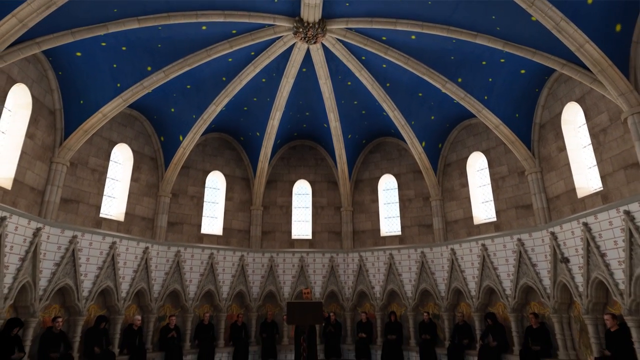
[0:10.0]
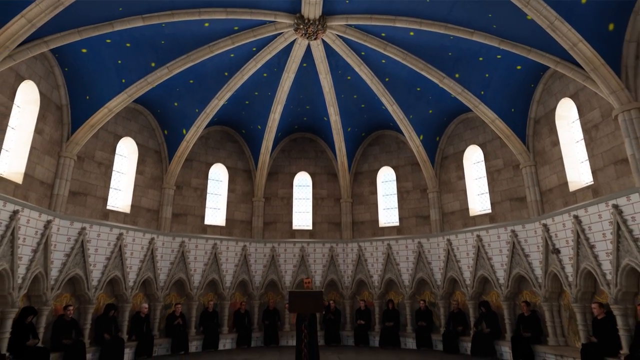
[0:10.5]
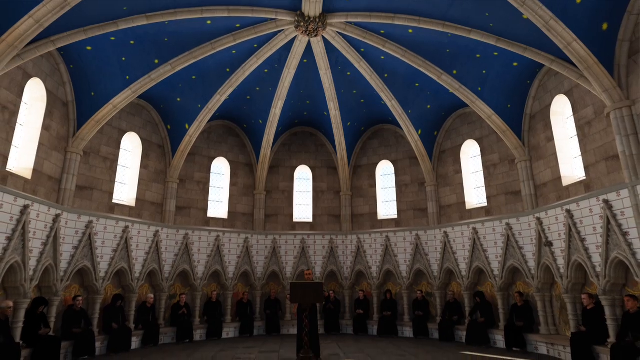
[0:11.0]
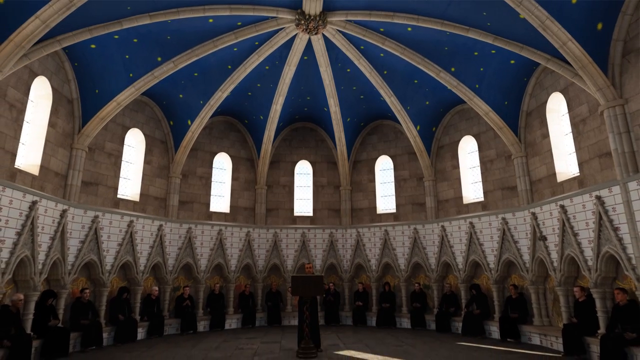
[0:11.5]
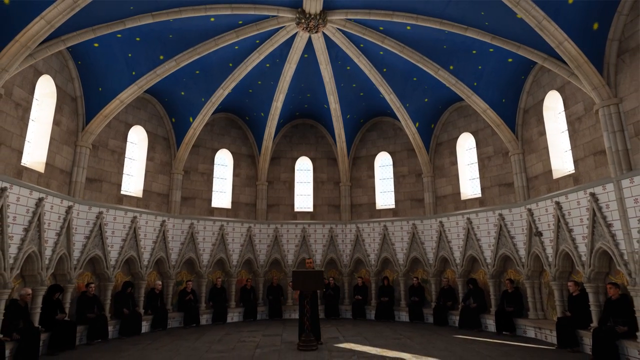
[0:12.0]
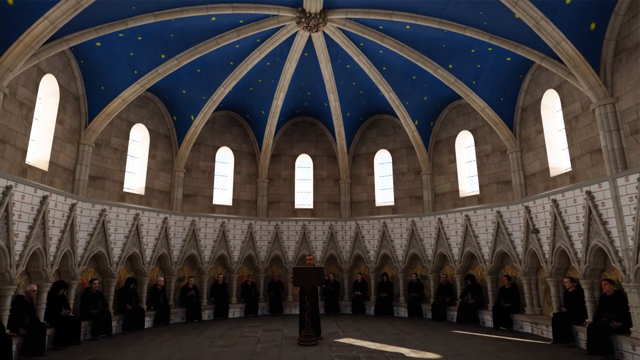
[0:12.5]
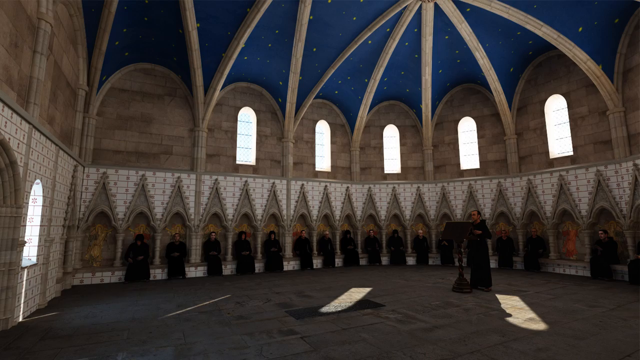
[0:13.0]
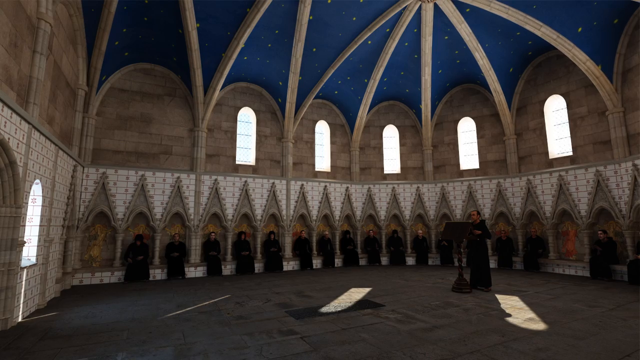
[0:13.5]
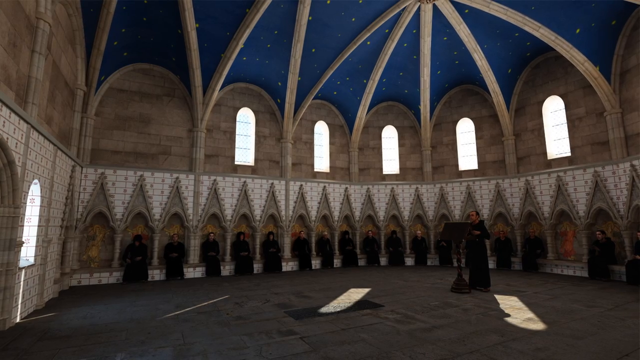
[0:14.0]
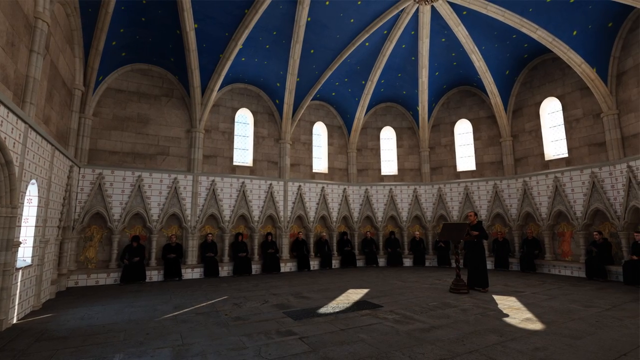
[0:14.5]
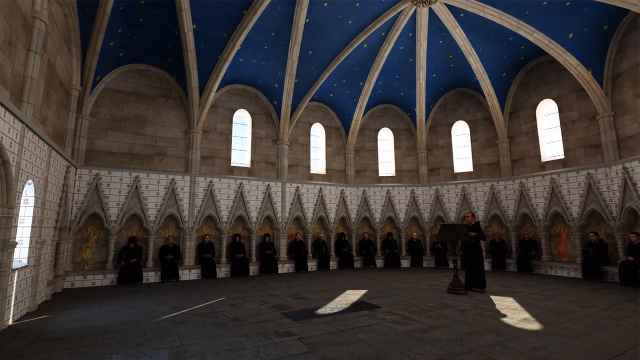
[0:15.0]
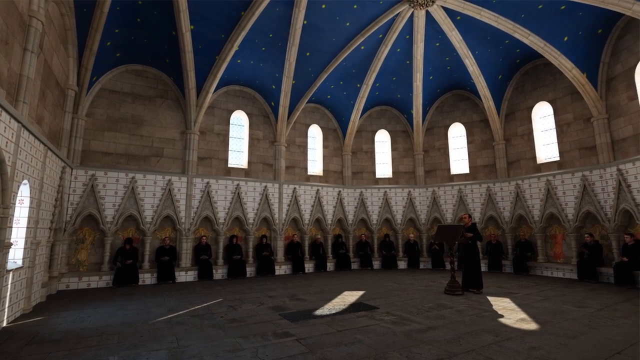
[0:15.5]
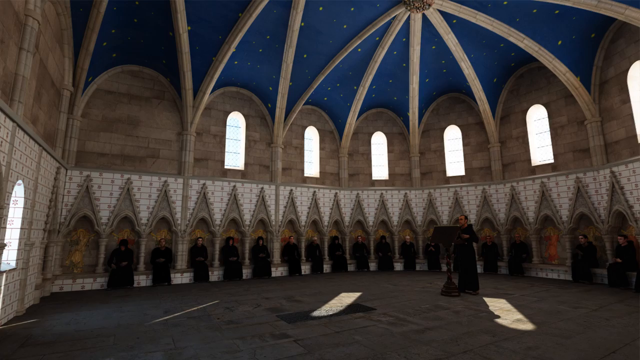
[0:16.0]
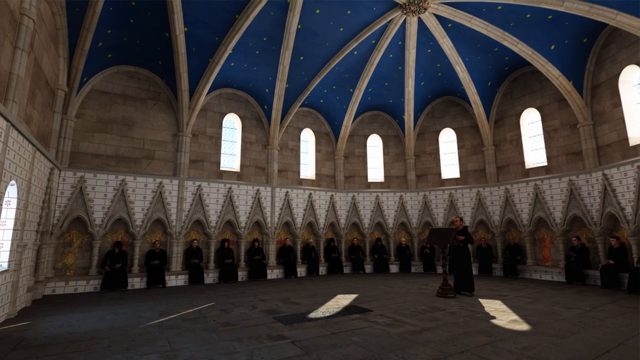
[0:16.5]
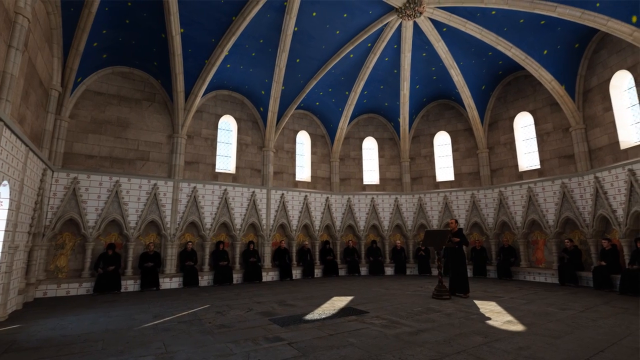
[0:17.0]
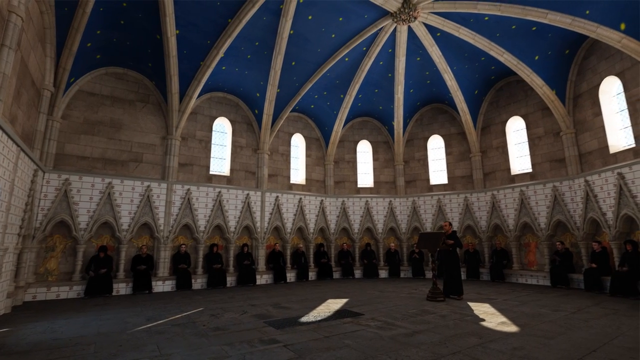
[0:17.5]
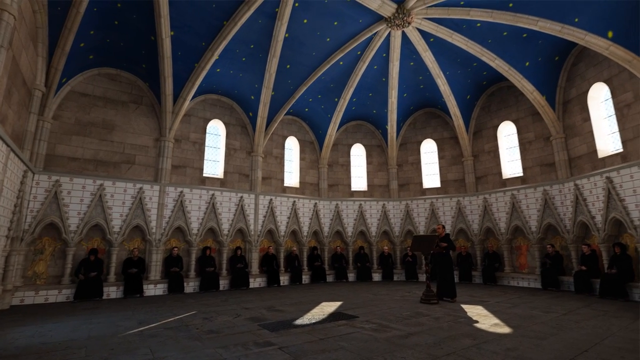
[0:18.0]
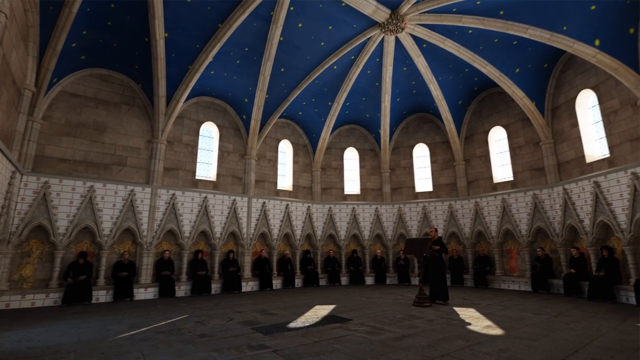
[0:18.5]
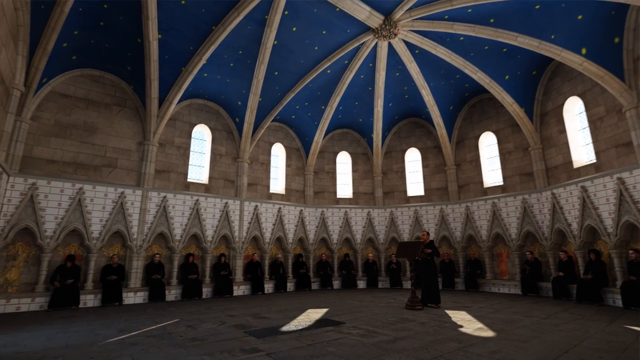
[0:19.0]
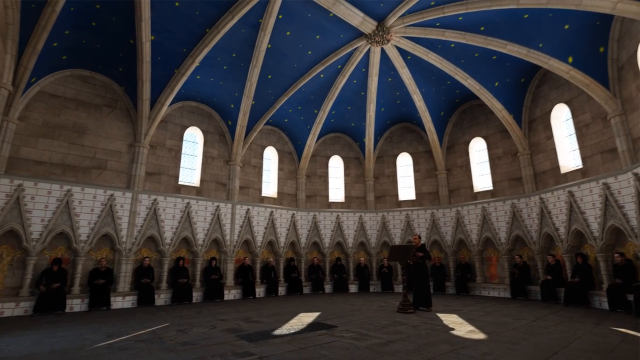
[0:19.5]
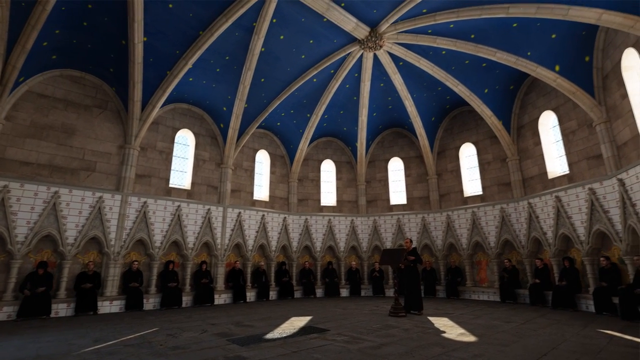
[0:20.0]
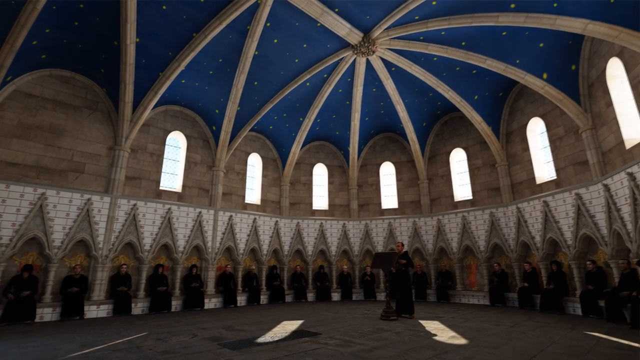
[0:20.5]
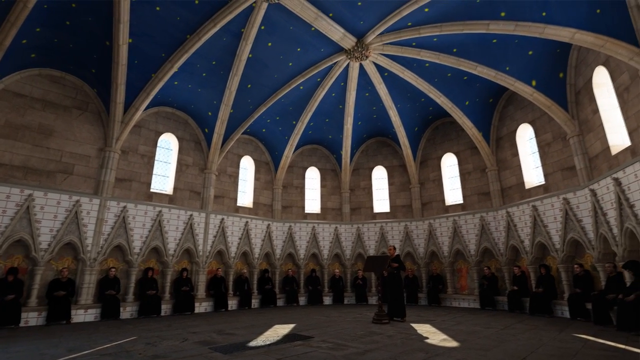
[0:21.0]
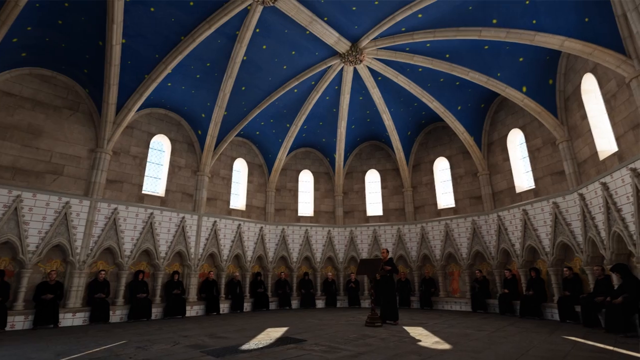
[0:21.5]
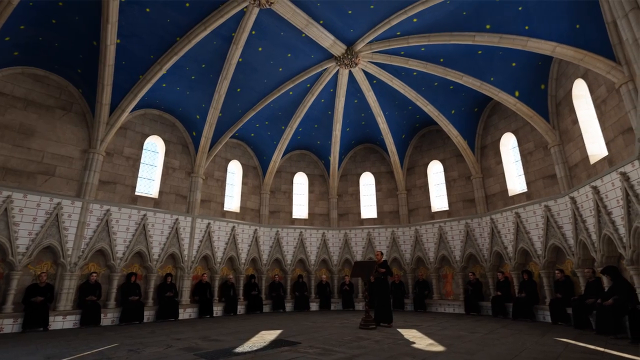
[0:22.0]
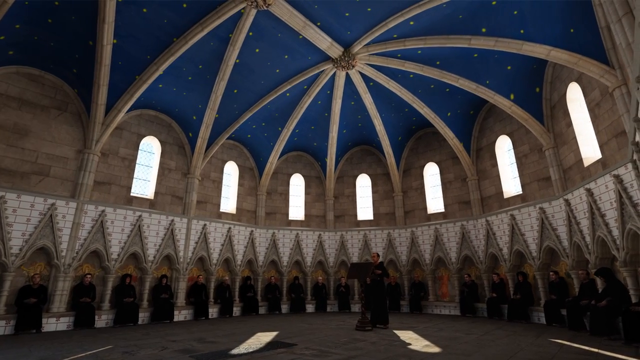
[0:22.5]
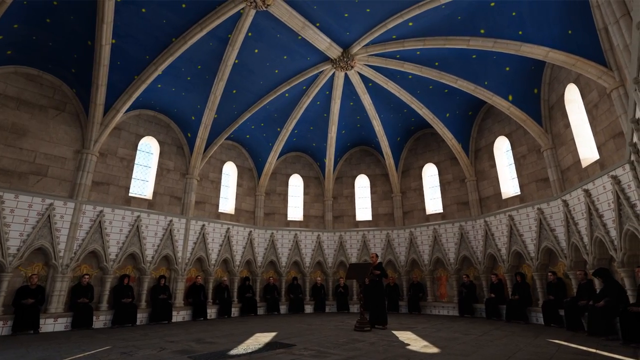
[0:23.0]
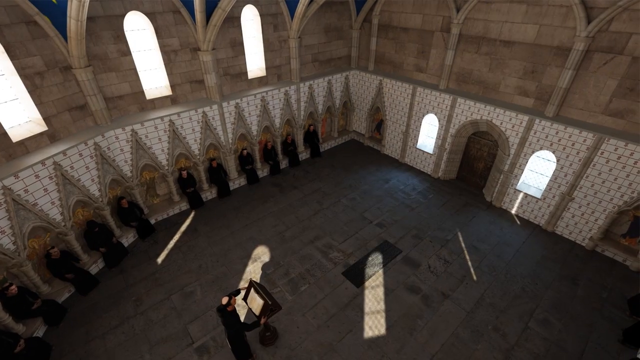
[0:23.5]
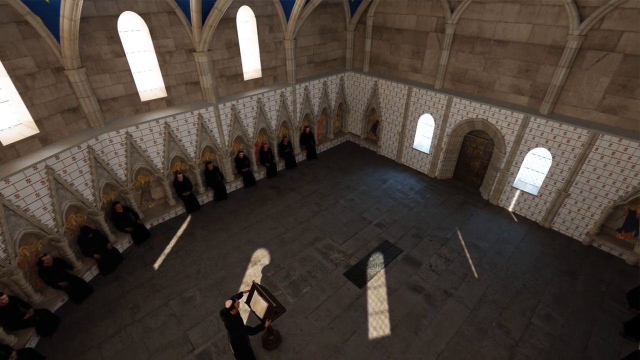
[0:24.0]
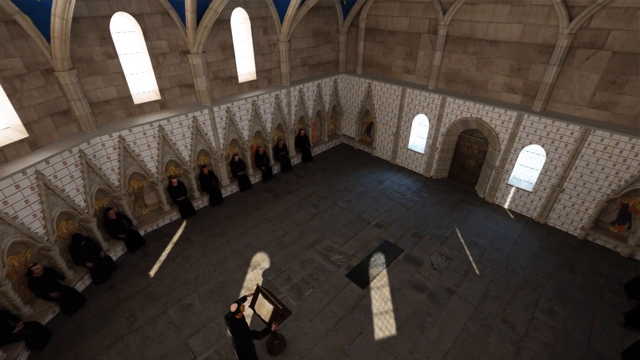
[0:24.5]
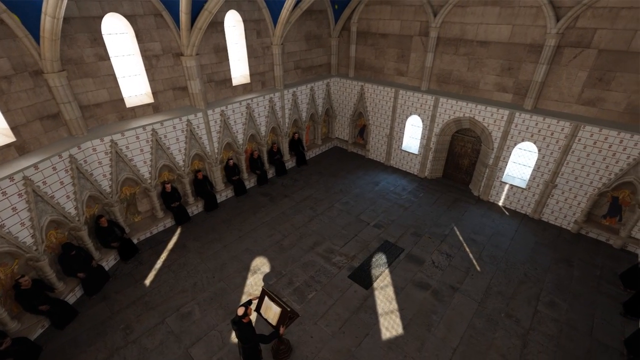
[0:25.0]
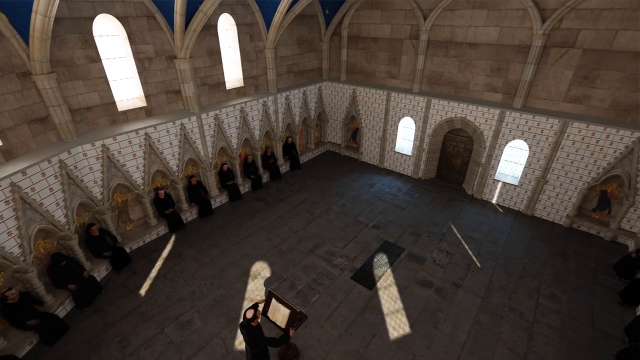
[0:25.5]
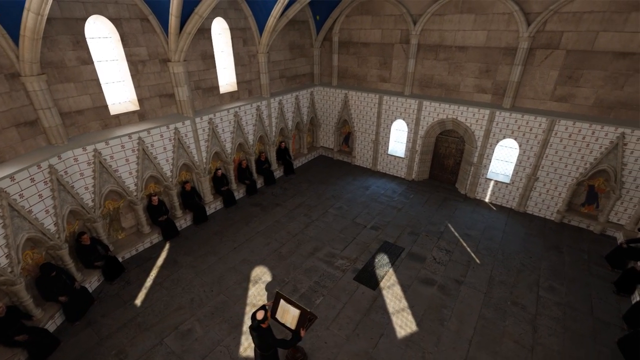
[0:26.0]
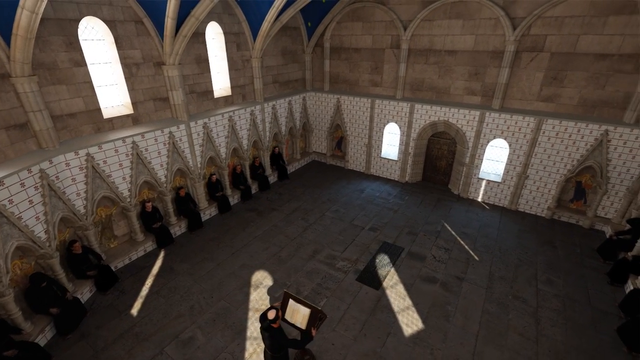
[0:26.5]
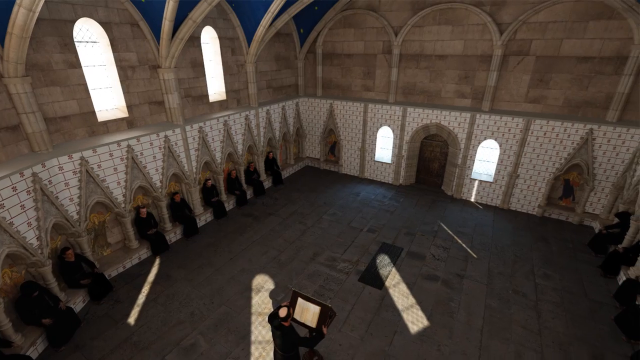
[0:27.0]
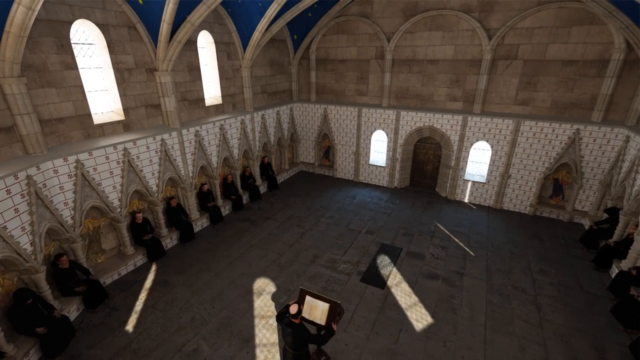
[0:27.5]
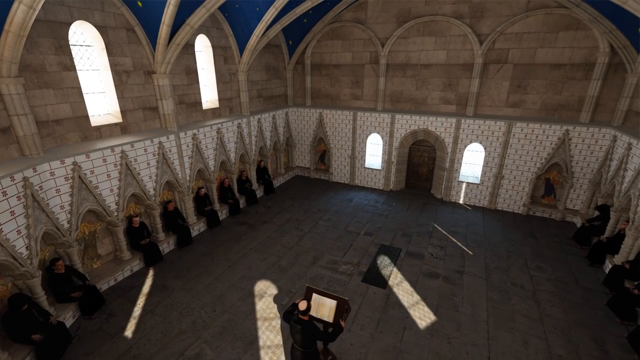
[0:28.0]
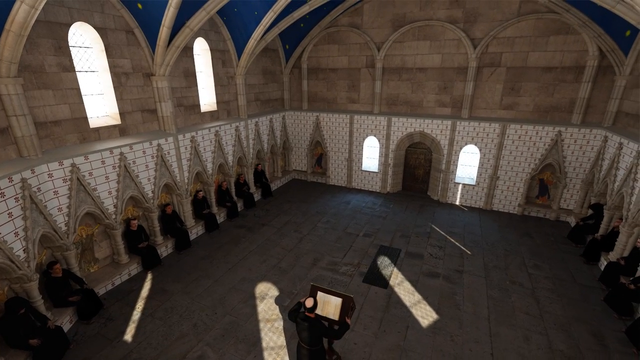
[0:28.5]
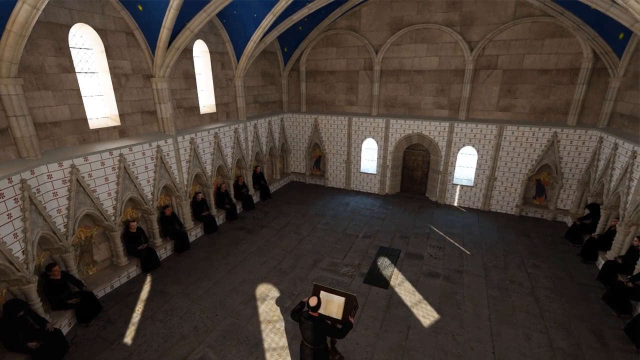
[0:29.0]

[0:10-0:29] The interior is of what may be a church or hall, some kind of religious building. The ceiling is dome-shaped and the building appears to be circular. In the middle of the ceiling is a cluster of ornate concrete, with concrete posts sort of coming out across the ceiling; the segments between them are painted dark blue with yellow dots to look like a night sky. Down the circular sides of the building are seven archways with arched stained glass windows in them, and only half of the building is visible. Seats run all around, with what seems to be a pointed stone piece, and what look like monks are seated in all of the seats.